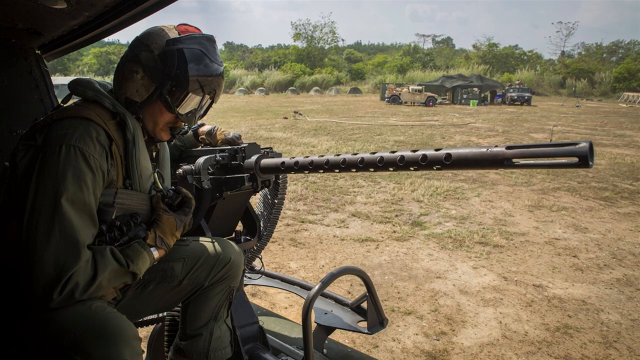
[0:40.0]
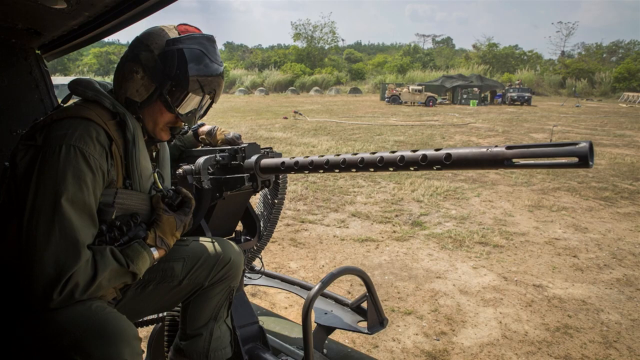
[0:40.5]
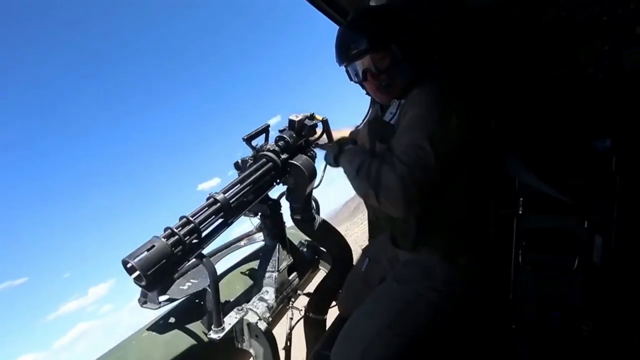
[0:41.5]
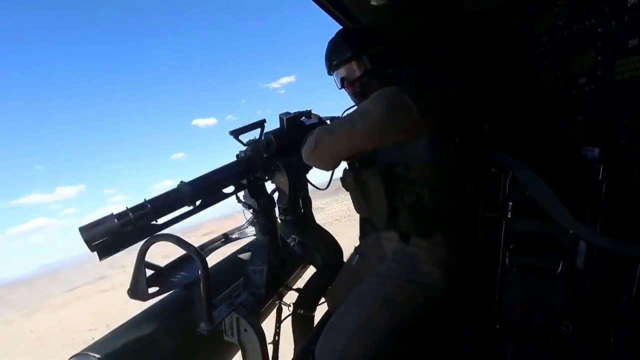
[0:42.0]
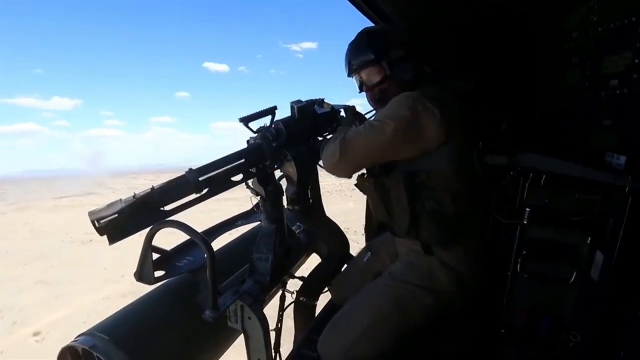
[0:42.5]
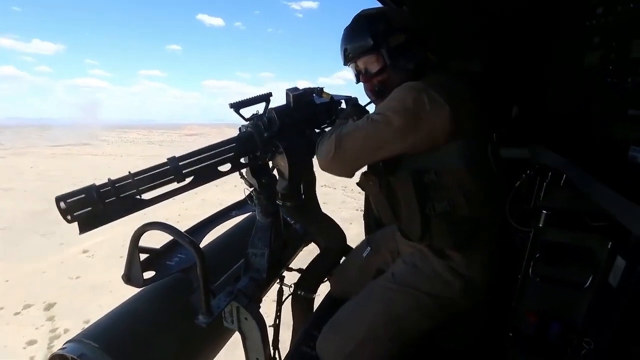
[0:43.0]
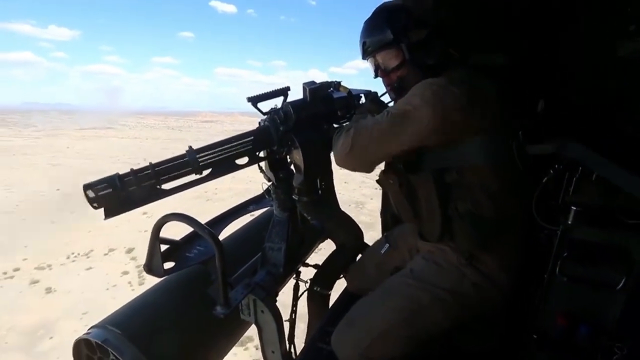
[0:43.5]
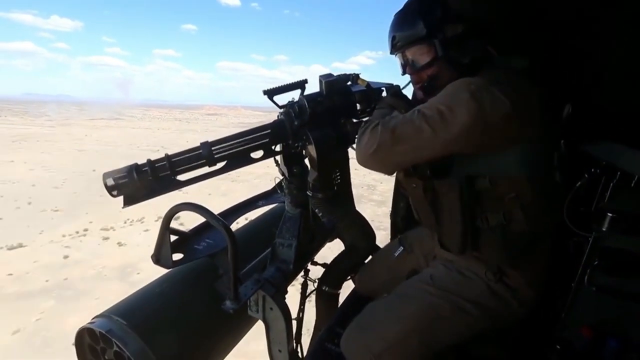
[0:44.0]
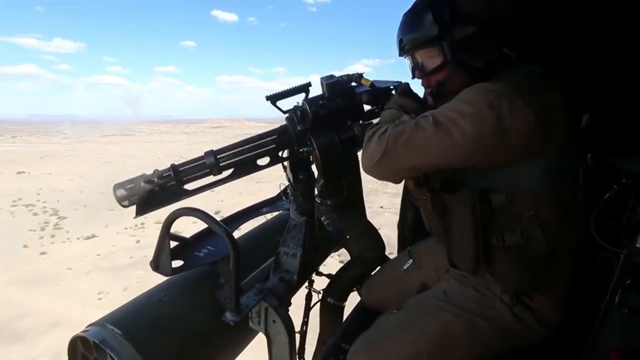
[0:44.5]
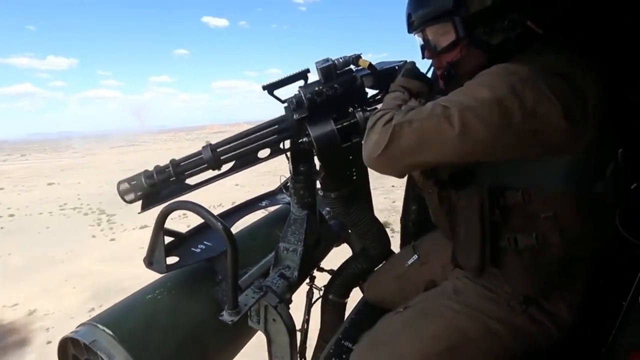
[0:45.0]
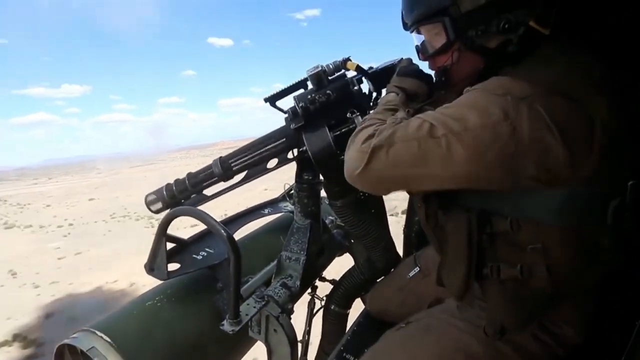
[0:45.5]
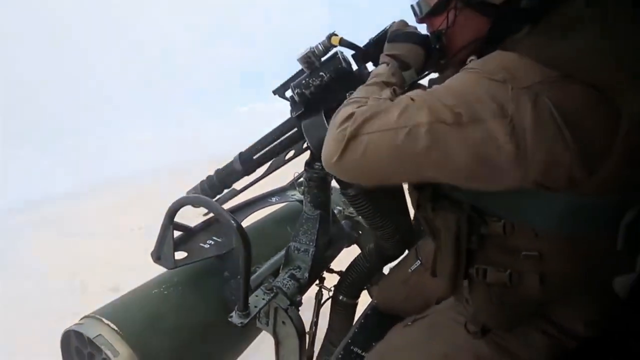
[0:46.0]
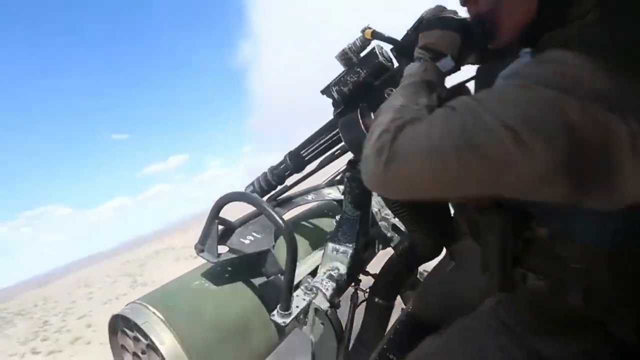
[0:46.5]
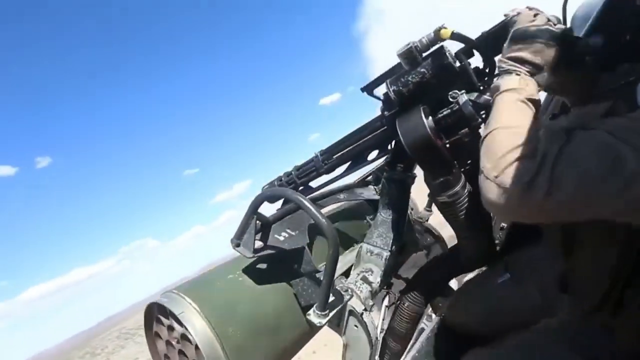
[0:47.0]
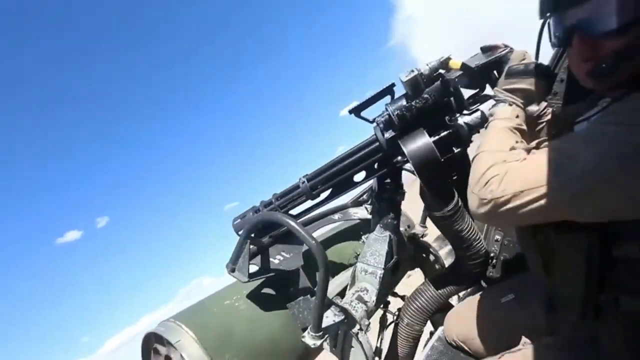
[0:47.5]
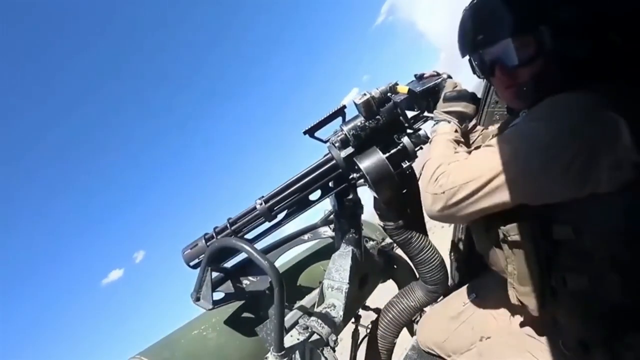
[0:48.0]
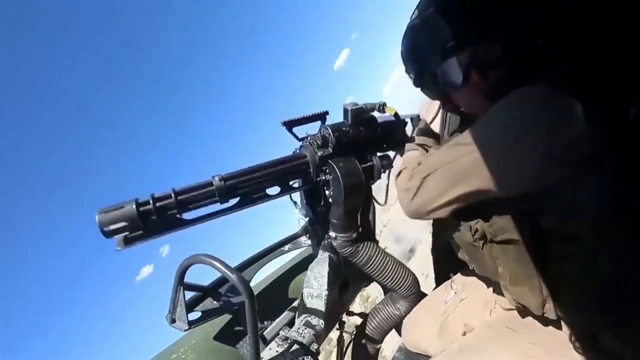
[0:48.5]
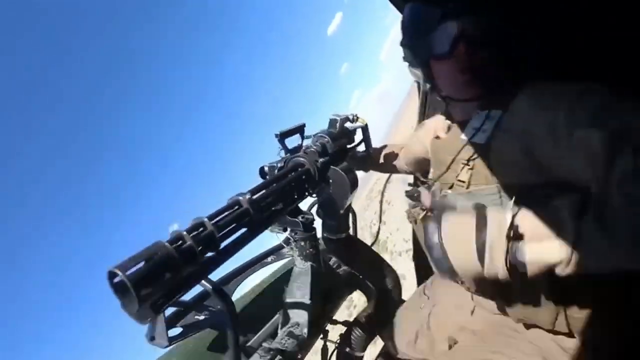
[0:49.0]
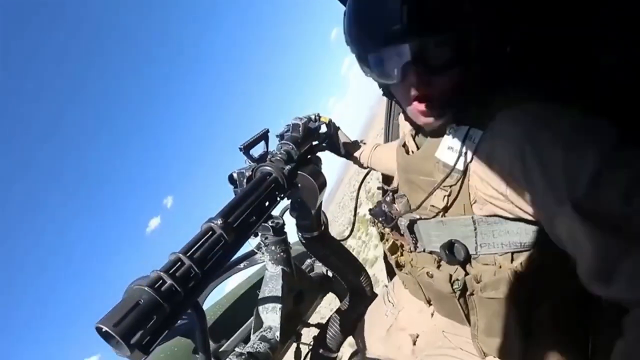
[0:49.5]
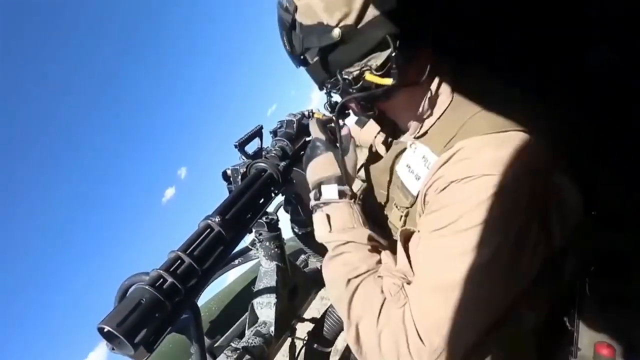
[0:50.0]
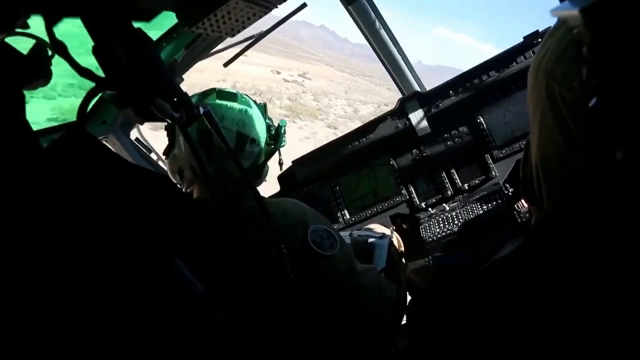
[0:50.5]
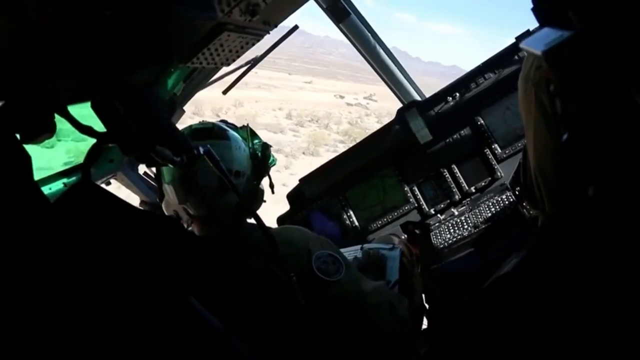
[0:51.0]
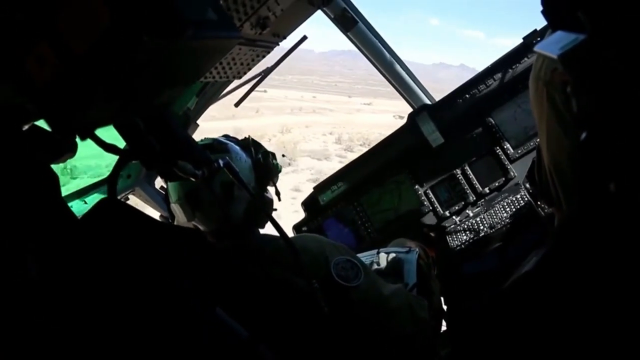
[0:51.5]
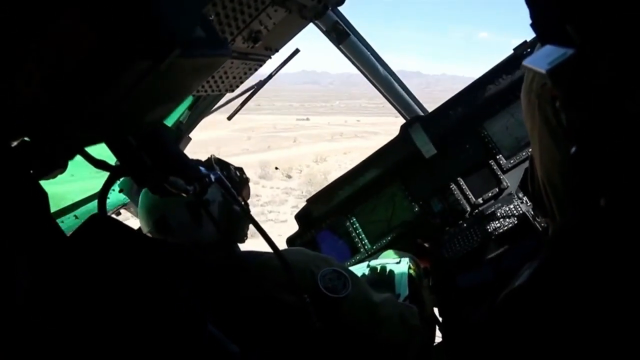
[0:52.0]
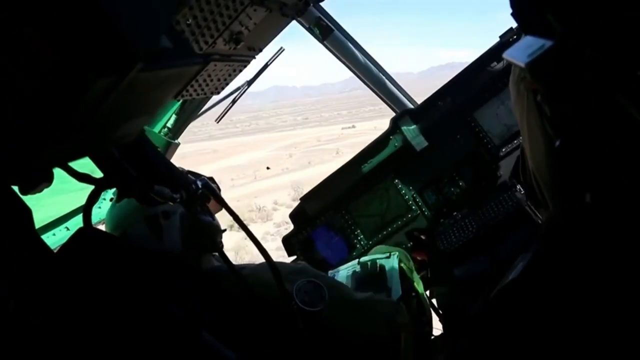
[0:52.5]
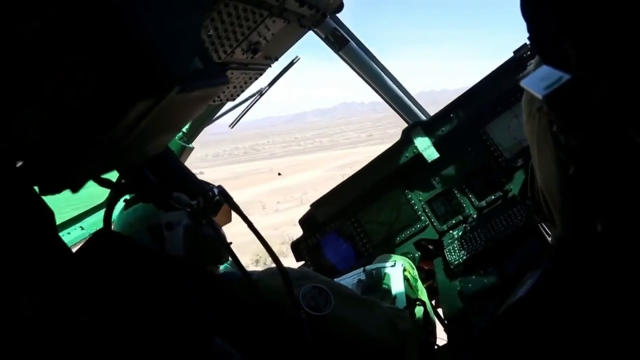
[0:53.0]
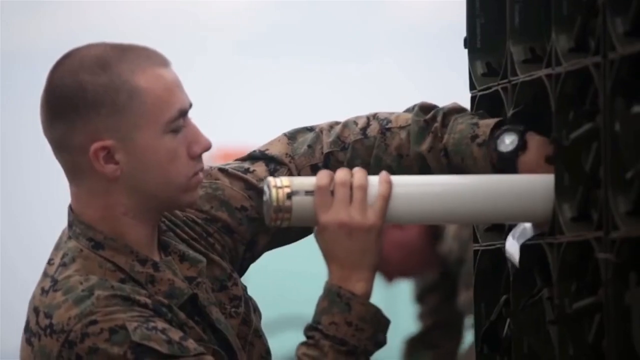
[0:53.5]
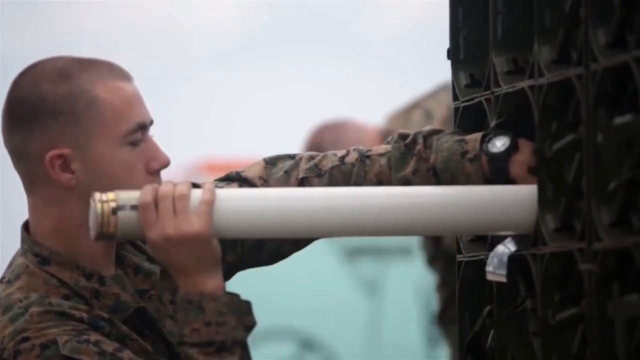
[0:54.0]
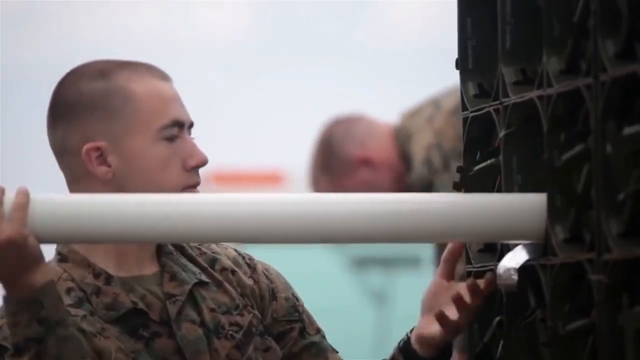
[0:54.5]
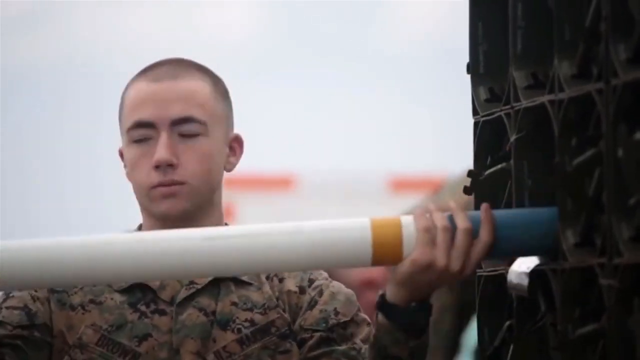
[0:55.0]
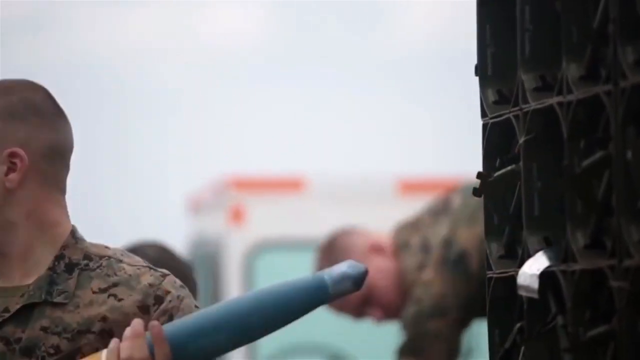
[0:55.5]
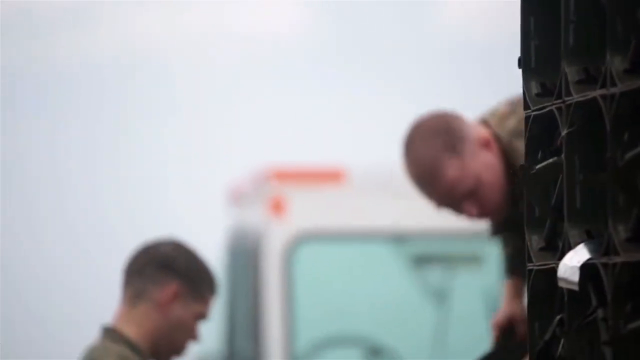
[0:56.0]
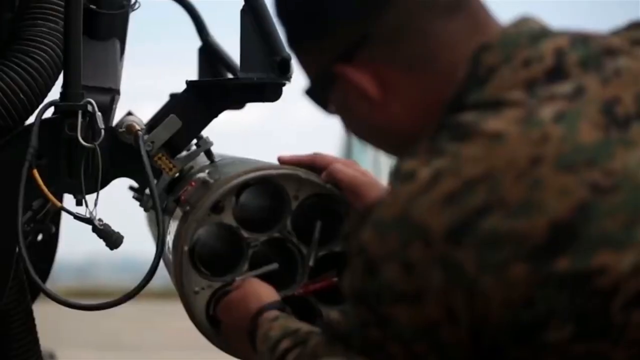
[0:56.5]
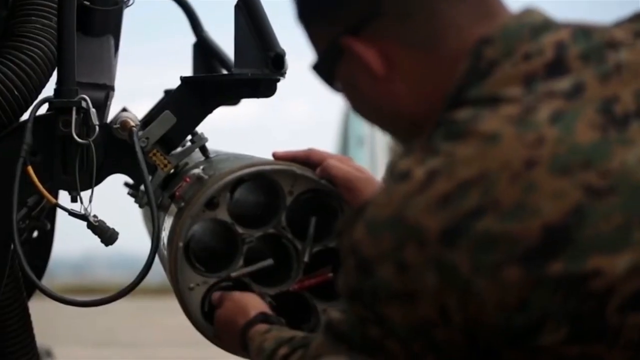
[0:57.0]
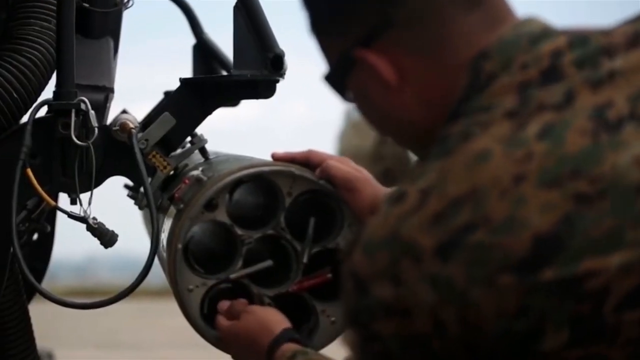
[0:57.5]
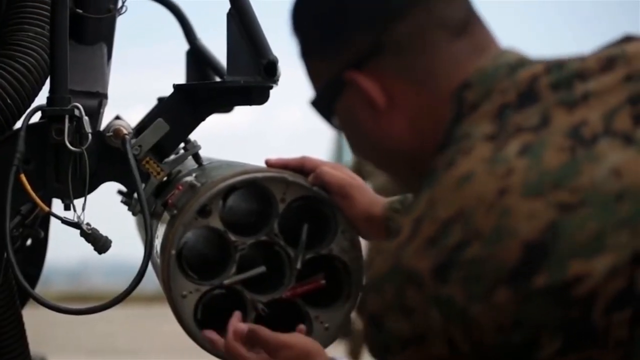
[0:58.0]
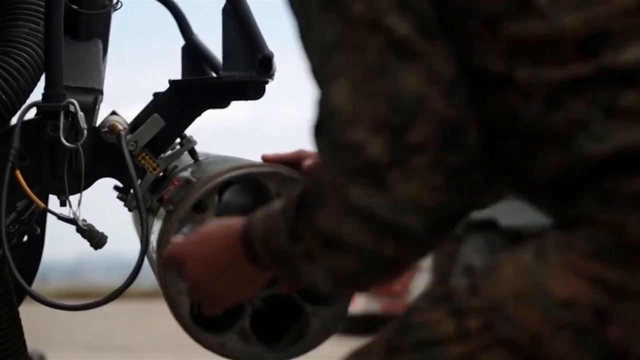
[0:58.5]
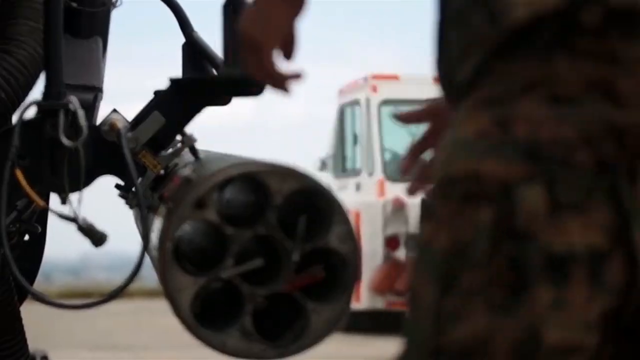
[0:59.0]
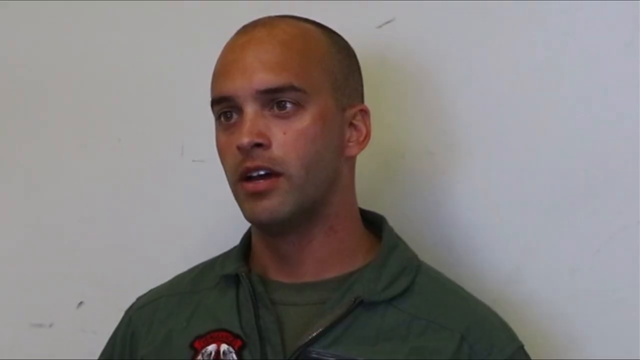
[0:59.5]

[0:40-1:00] A soldier fires a minigun out of a side bay. A helicopter pilot veers the helicopter suddenly to the left. A group of marines loads missiles into a missile pod on the side of the Huey attack helicopter; whether they are preparing for training exercises or for combat is unclear. Various machine guns are displayed, and men in the side bays hold onto their machine guns, apparently relaying and receiving orders.